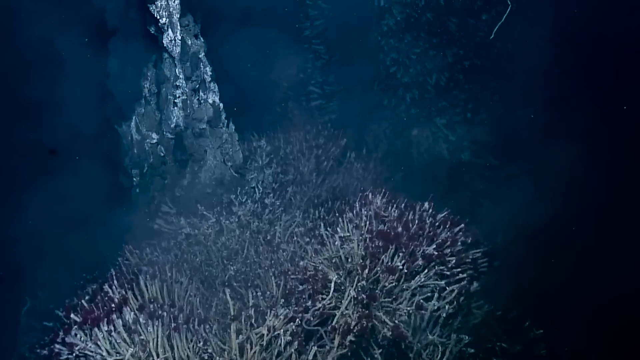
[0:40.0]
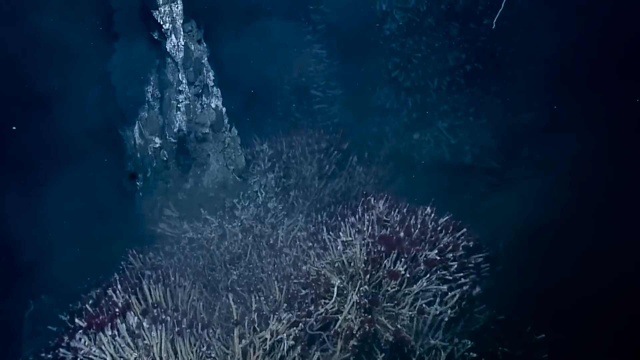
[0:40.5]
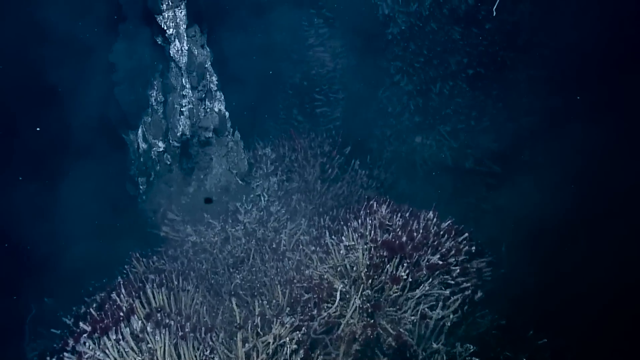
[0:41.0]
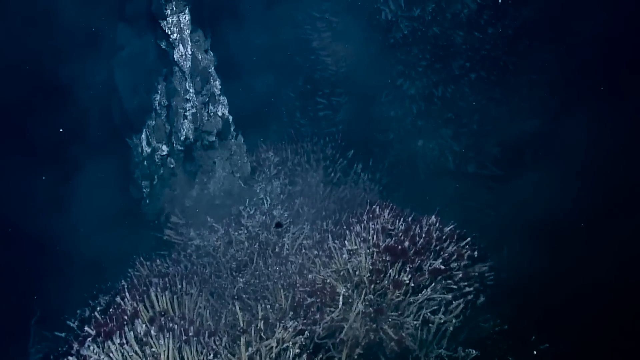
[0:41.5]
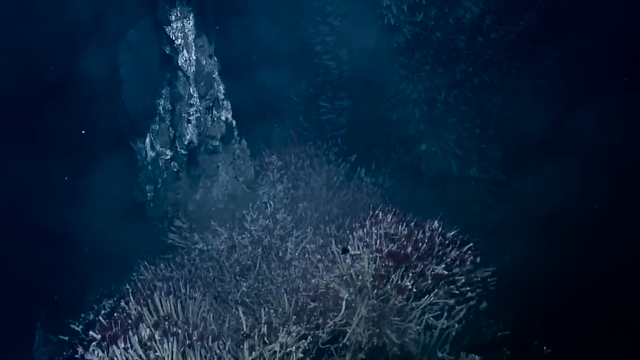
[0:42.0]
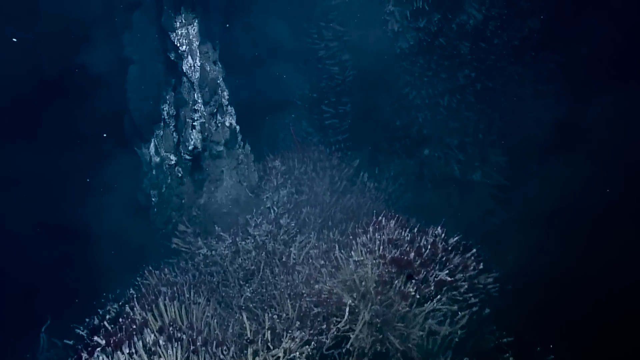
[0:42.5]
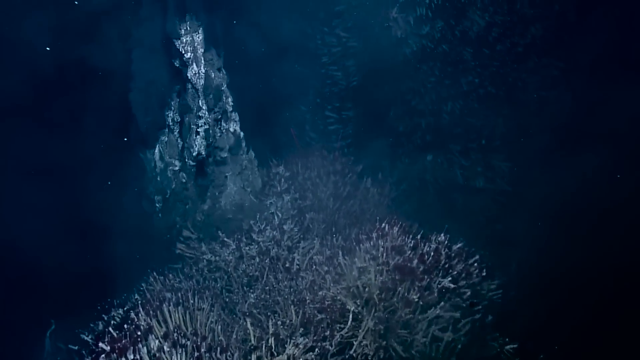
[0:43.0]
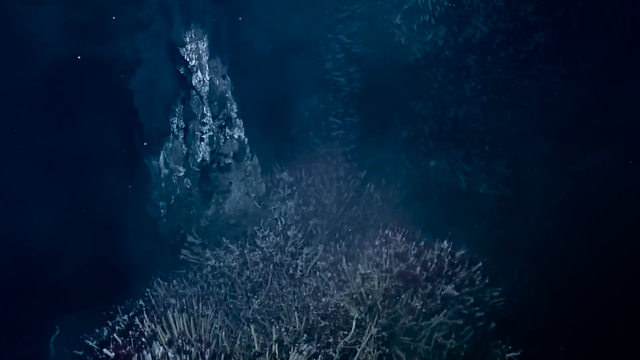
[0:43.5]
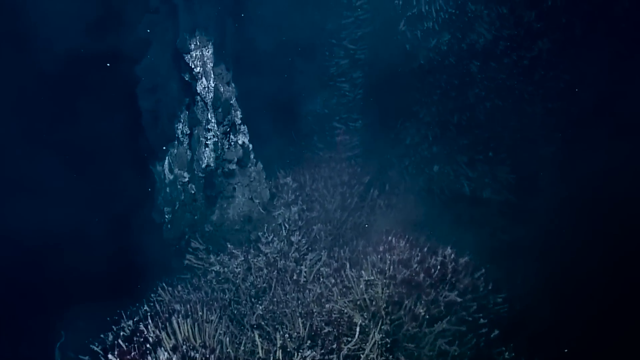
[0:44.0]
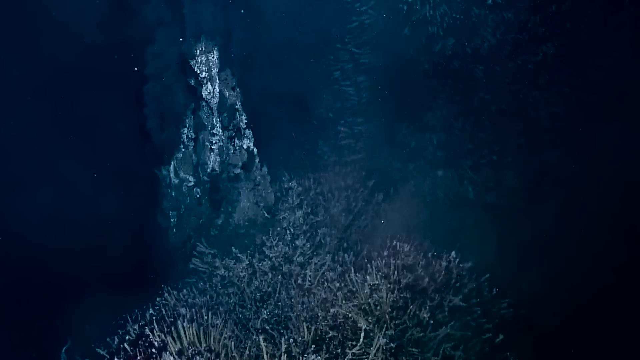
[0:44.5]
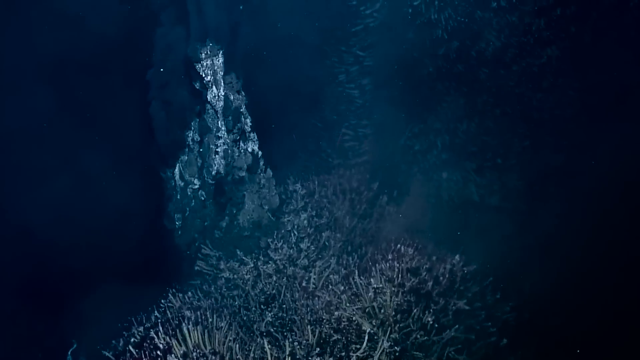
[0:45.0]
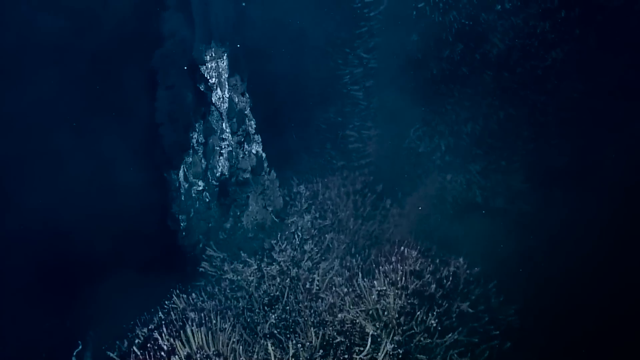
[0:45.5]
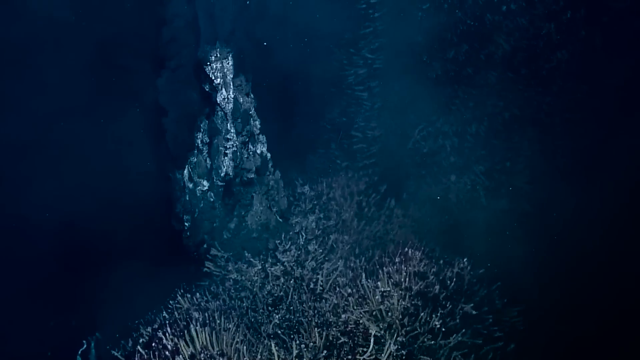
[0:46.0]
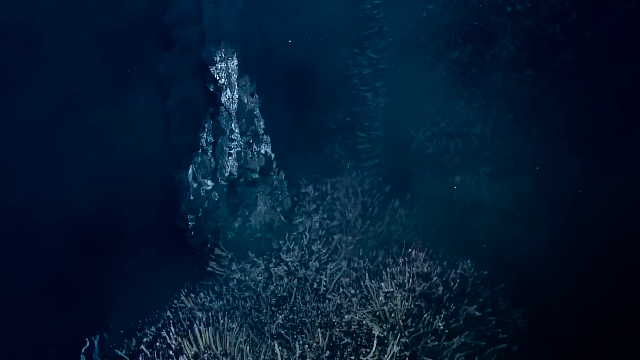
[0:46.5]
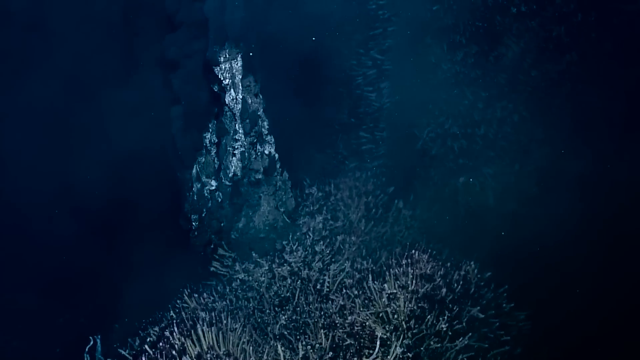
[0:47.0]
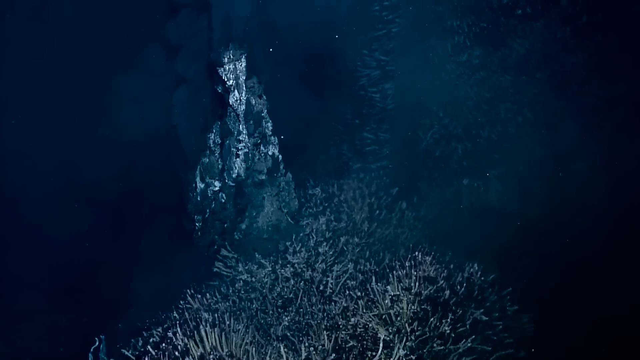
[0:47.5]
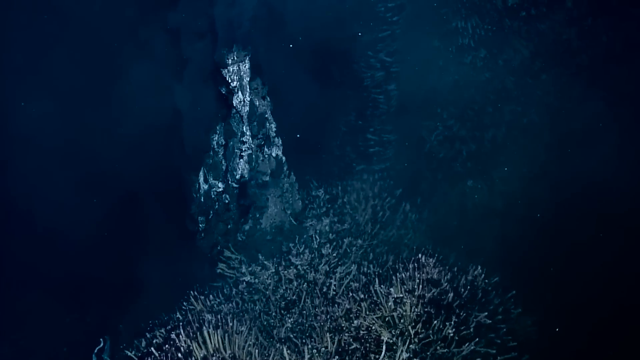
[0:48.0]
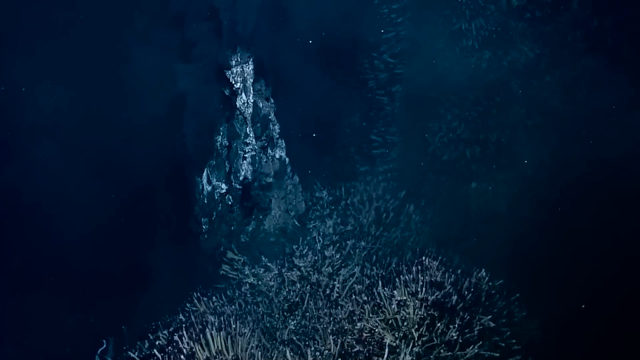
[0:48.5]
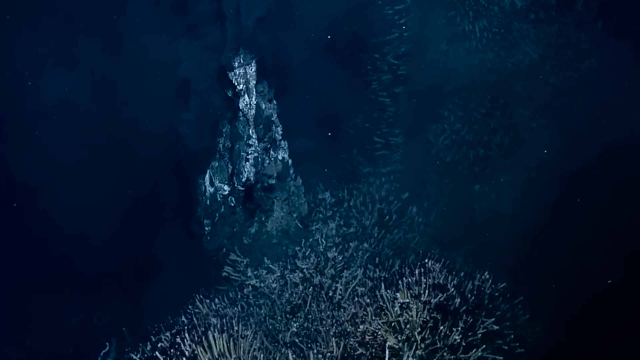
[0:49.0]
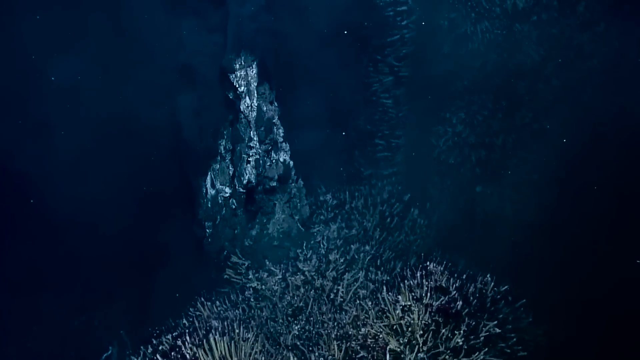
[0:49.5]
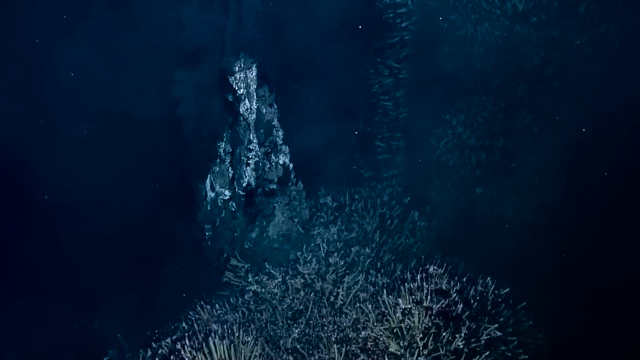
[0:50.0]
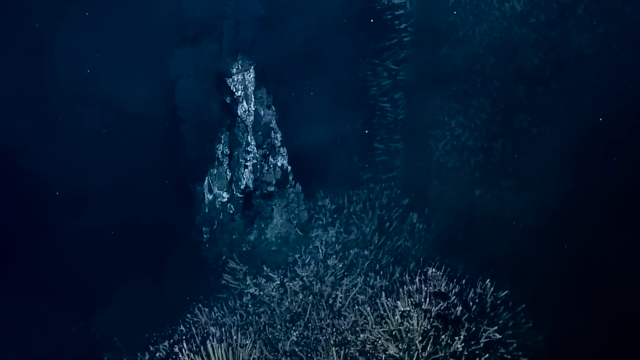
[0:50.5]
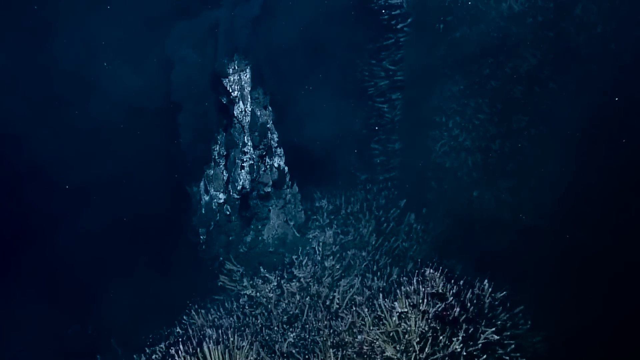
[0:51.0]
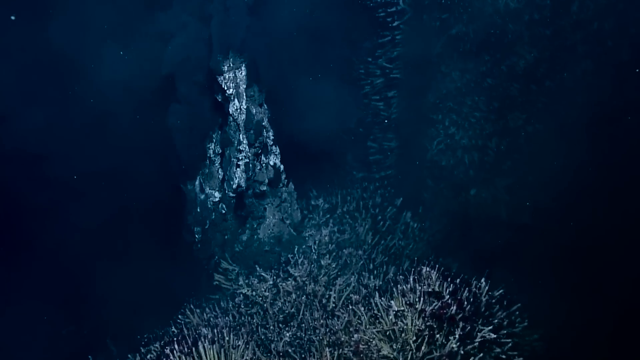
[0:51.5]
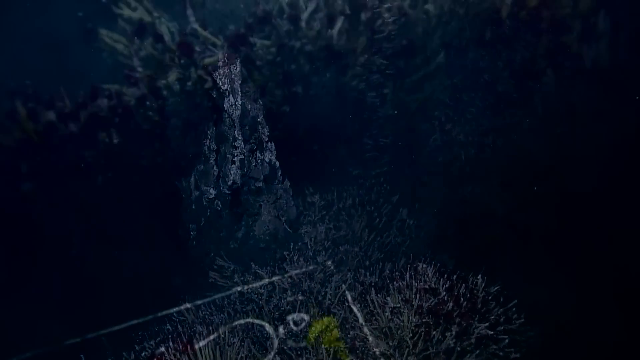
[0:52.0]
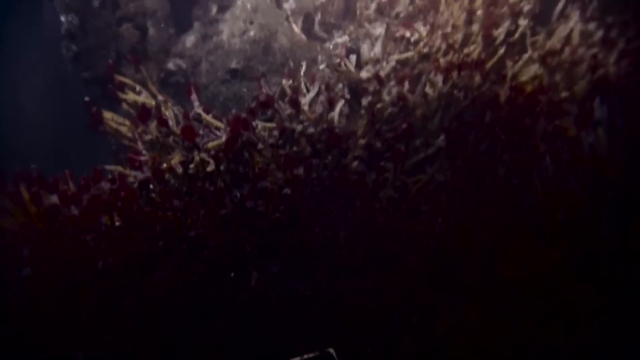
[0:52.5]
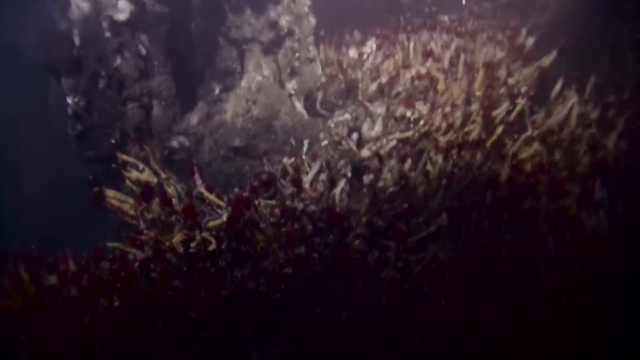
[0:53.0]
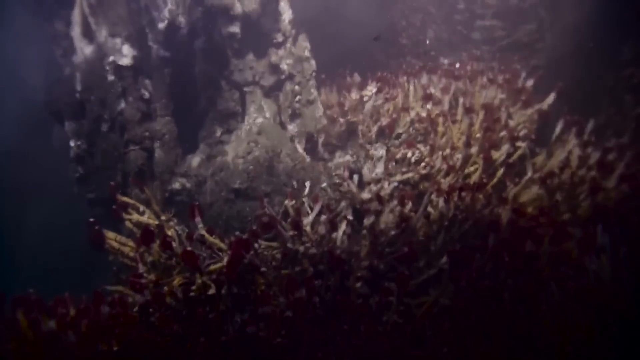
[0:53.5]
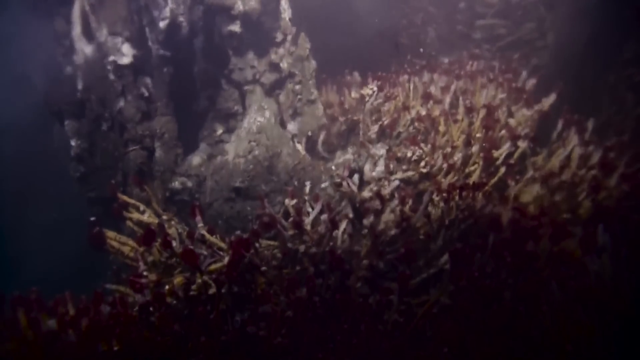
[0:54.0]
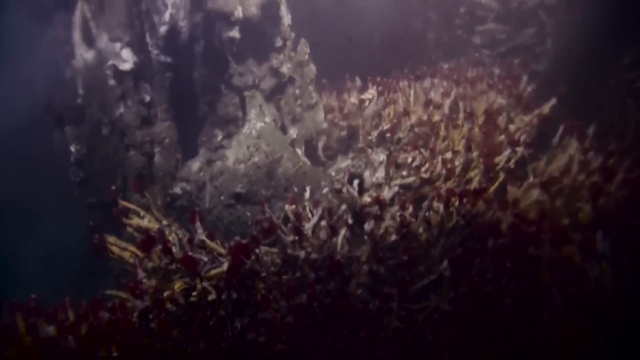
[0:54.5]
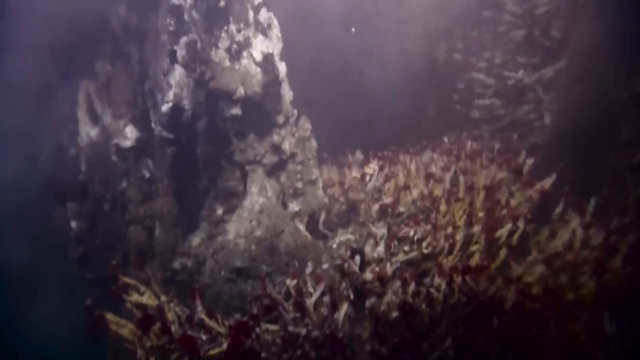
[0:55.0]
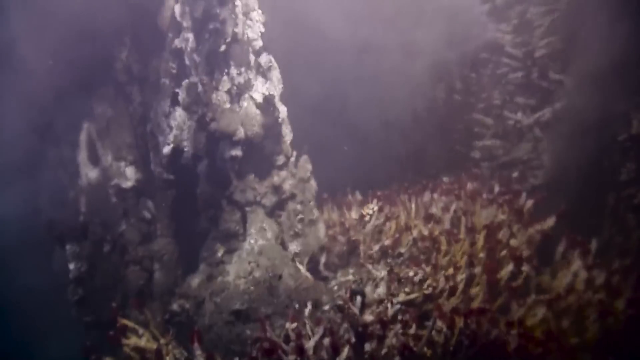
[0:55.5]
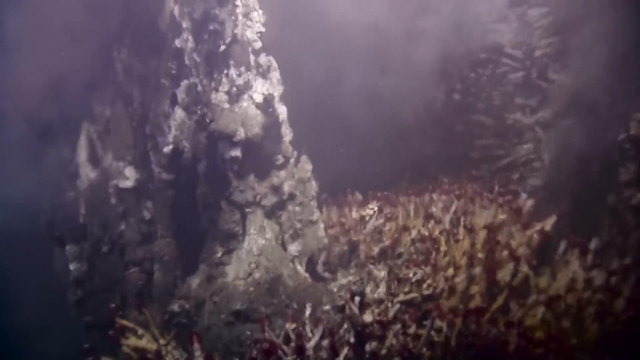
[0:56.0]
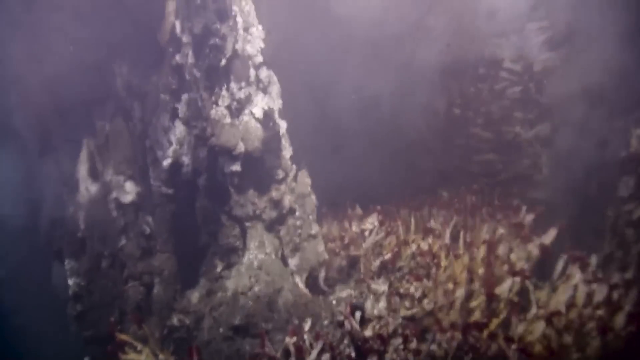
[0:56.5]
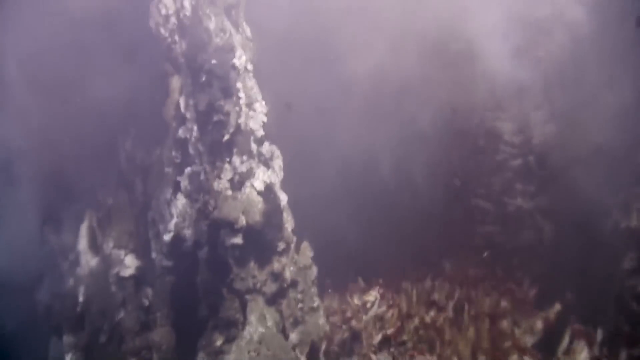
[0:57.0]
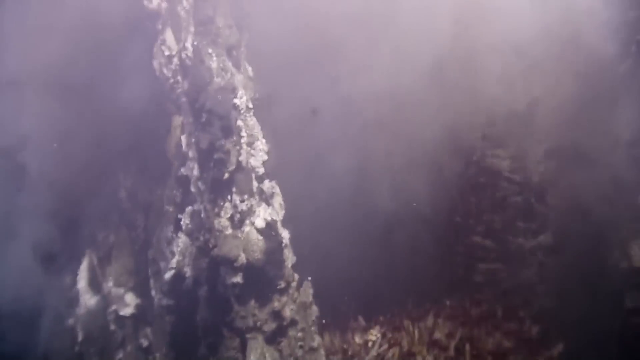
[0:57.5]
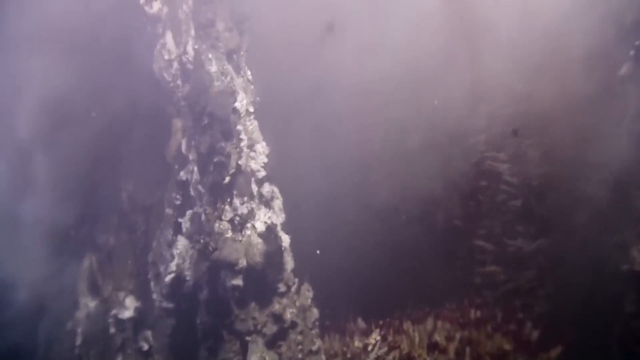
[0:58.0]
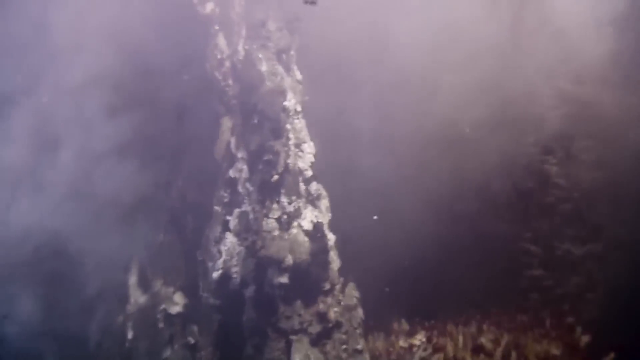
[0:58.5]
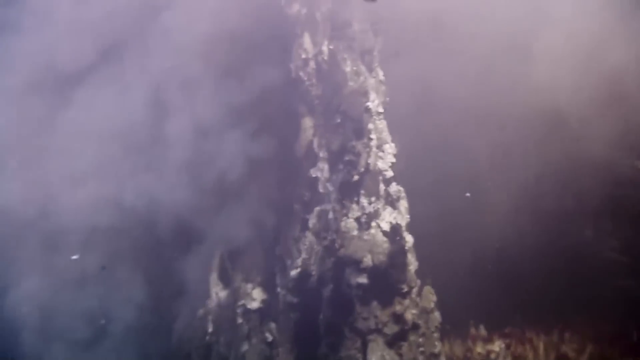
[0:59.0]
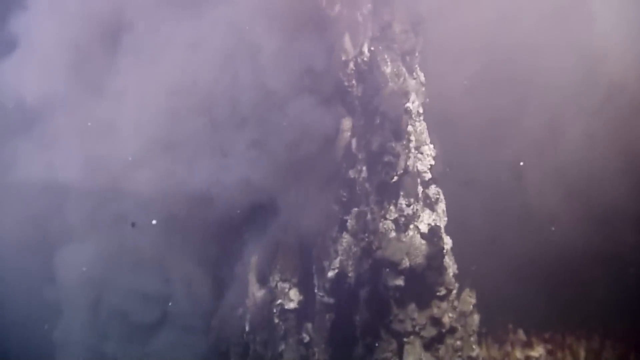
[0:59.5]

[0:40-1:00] Deep in the ocean, there is white and red coral and a rock that looks rusty and moldy, silver and dark brown. Tiny creatures move around the screen from left to right, and one black one moves around as well. There seems to be smoke, or what looks like dust, in the background. The view then zooms in on another coral, yellow and red, that looks very strange and moves slowly from right to left. Another dark brown rock appears, and it looks as if a fire is starting and it is burning. The image is a little blurry, and other very small white objects move around.